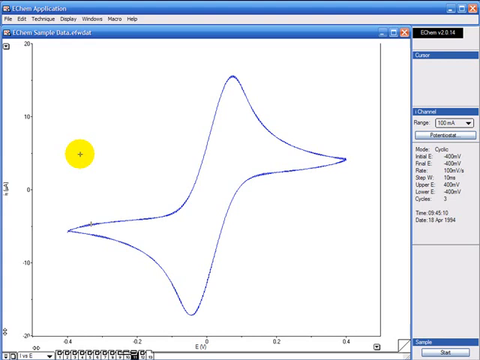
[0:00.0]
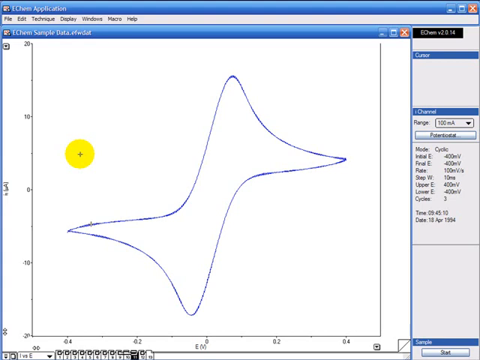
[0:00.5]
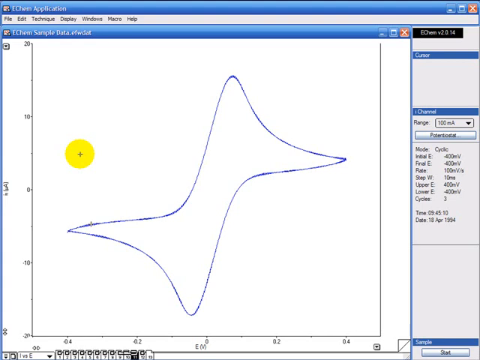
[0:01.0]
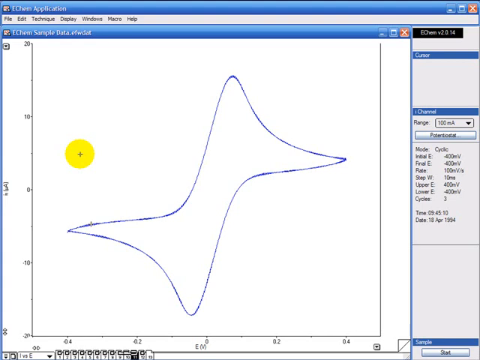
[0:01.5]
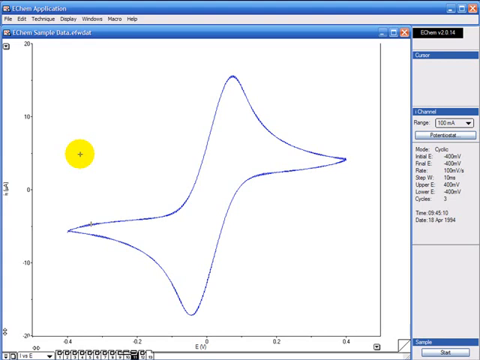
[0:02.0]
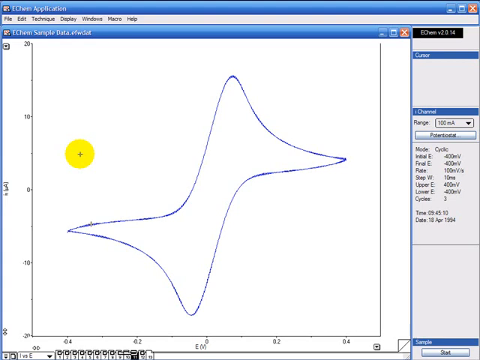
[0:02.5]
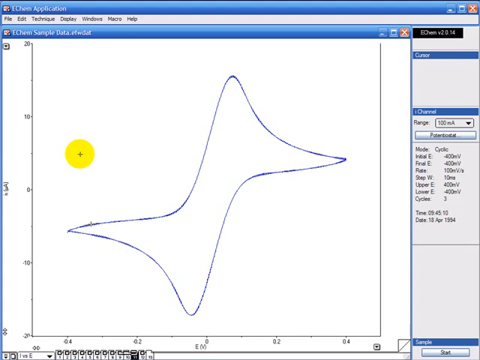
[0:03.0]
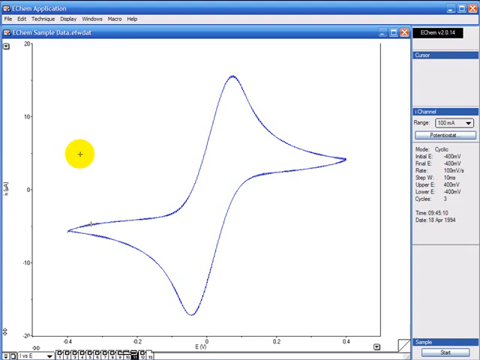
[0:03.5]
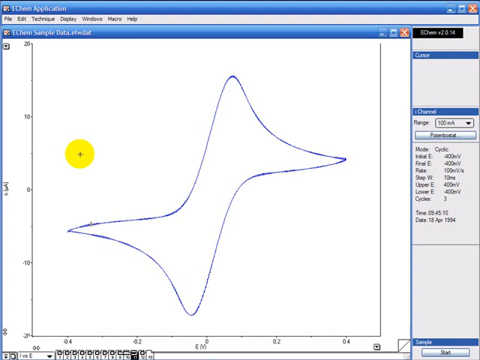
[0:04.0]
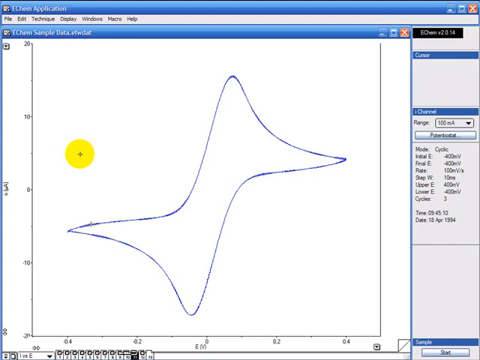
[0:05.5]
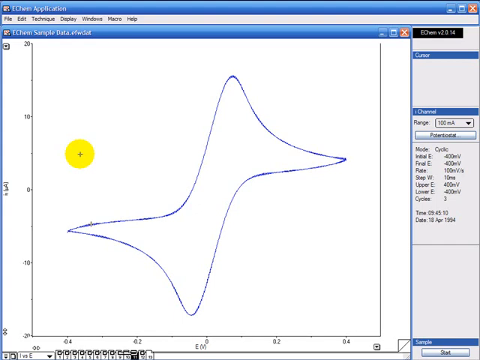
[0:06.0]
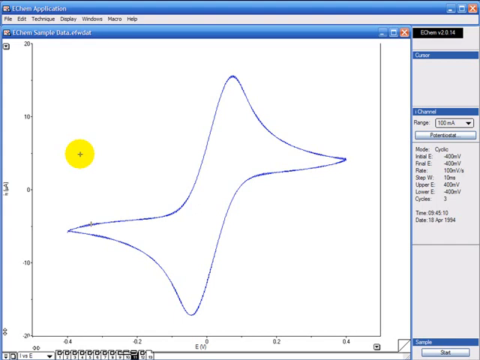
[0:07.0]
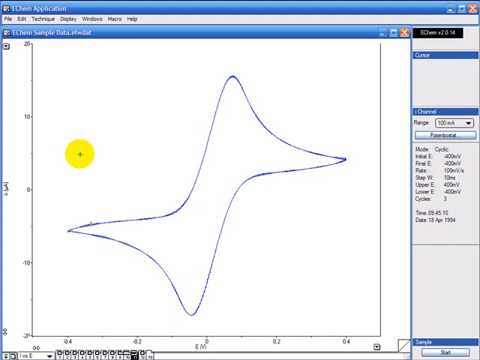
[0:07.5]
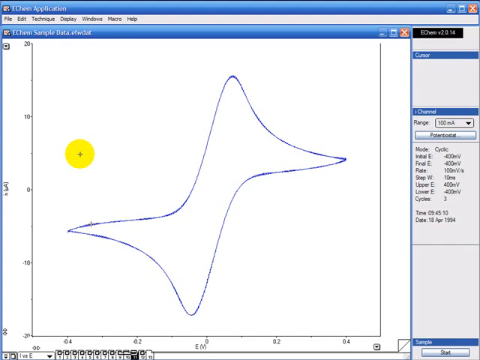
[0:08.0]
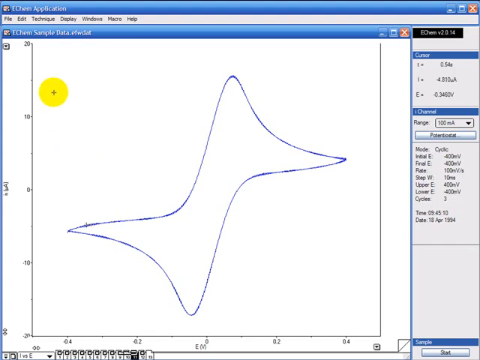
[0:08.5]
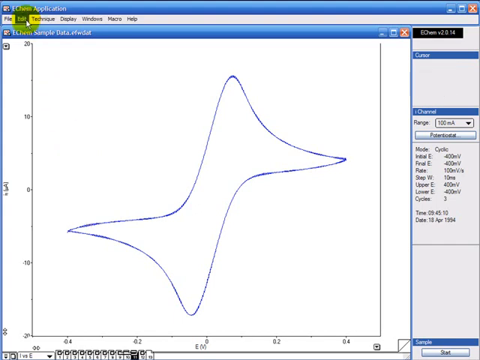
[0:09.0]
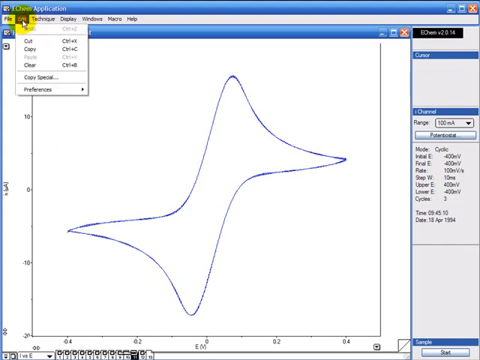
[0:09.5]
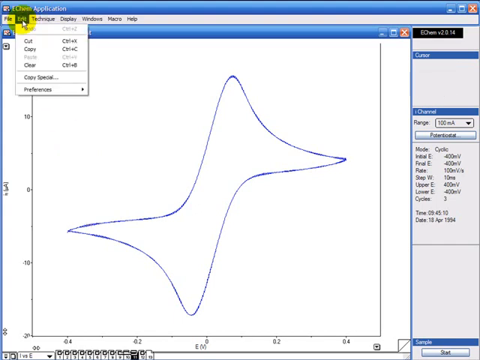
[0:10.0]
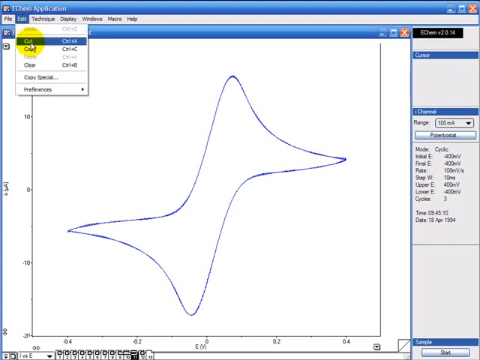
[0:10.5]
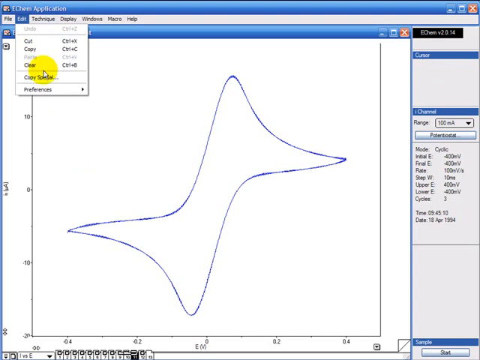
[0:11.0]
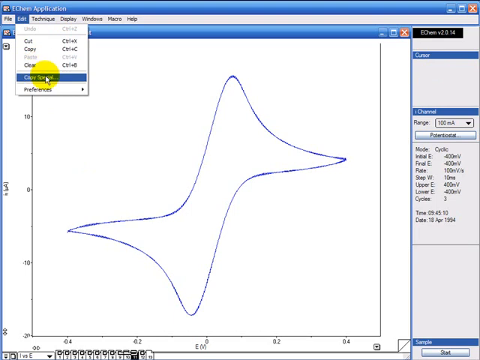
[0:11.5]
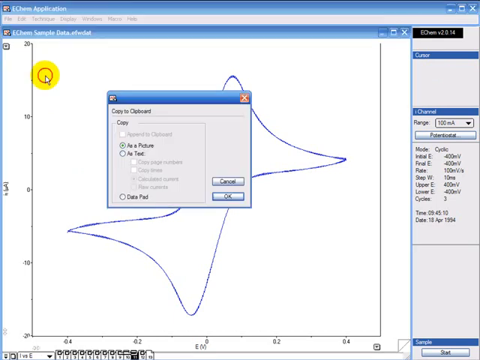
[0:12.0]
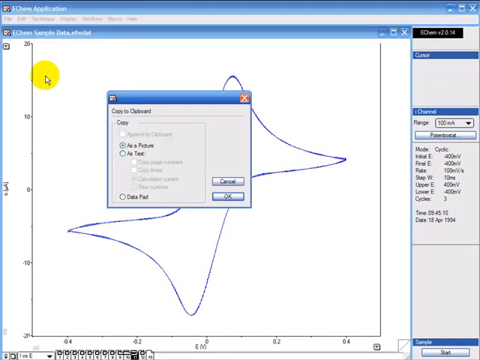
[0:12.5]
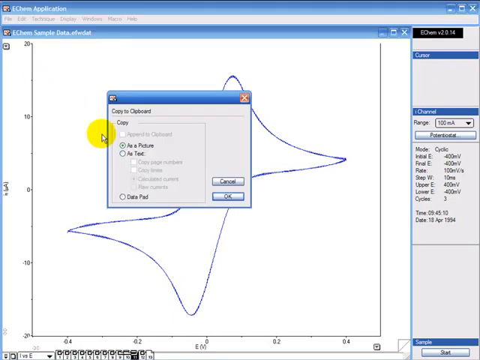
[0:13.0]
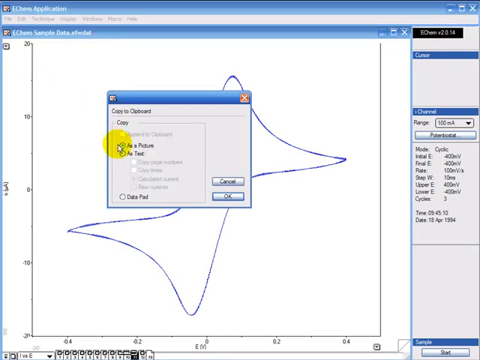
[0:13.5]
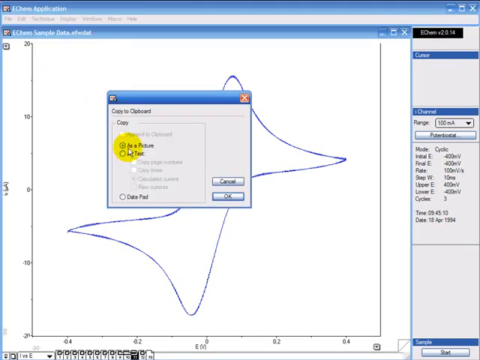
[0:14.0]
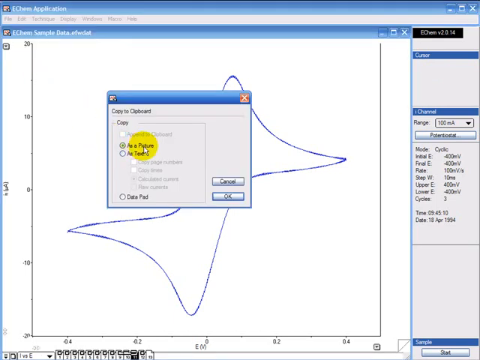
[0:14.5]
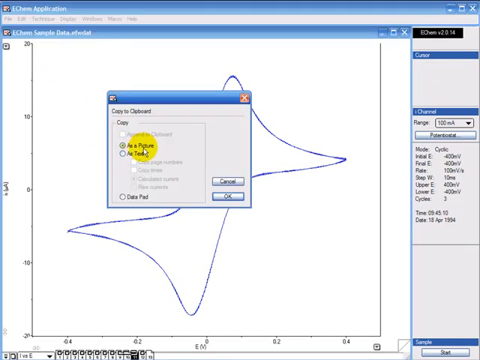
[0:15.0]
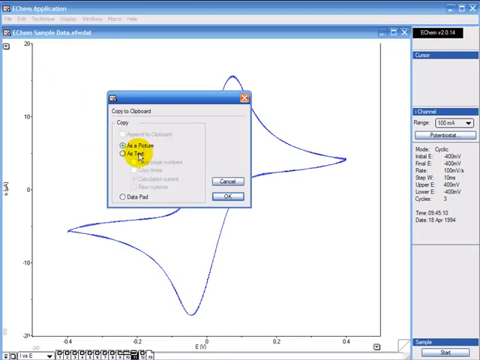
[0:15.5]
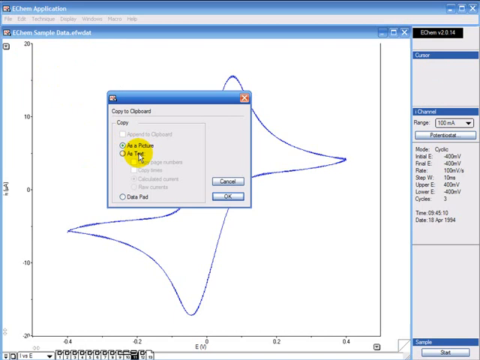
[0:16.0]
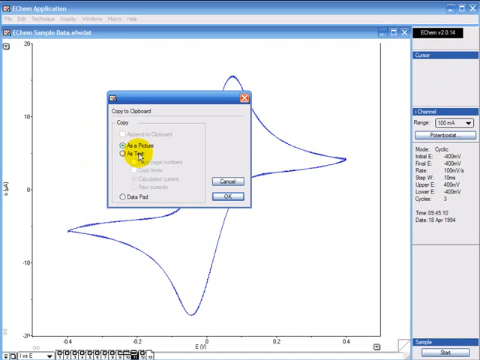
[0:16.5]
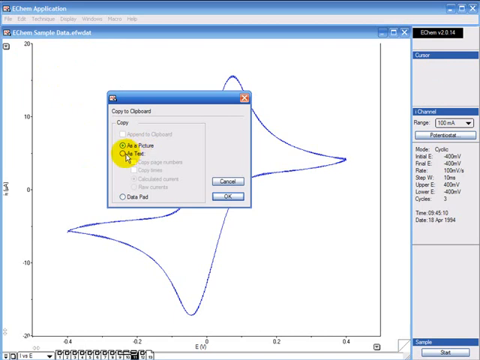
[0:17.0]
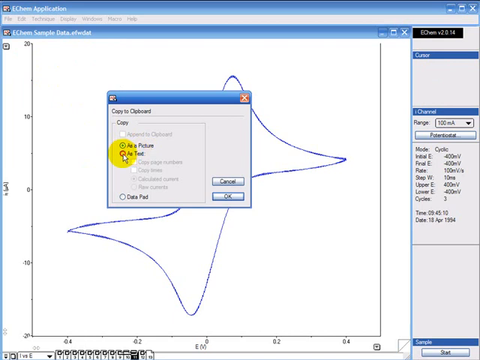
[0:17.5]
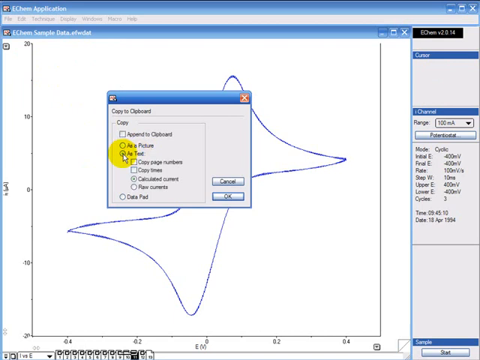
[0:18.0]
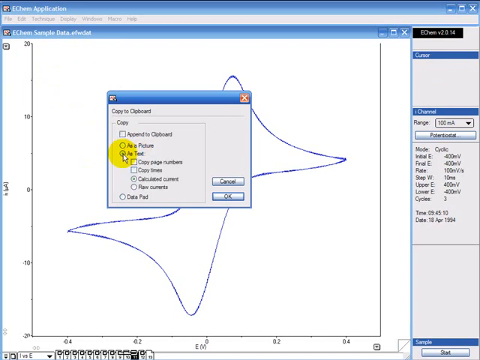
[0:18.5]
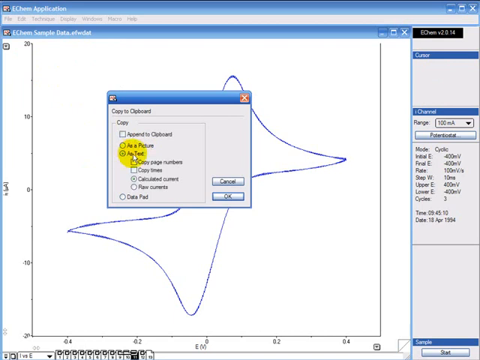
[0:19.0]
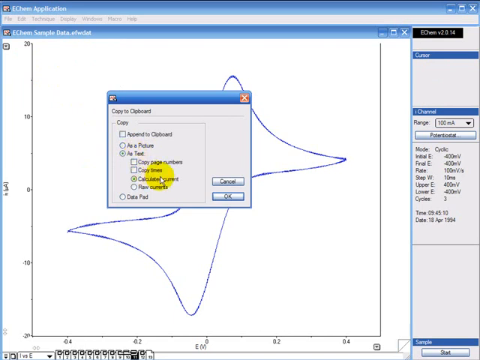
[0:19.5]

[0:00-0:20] A computer application appears to show a plotted graph with an awkward, sort of oblong, skewed shape. A yellow-highlighted cursor goes up to Edit, then copy to clipboard, and chooses not as picture but as text; the steps appear to walk through adding the shape to another application. On the right-hand side of the image there is a lot of information in a kind of toolbar; it says "cursor" and has a range, mode, "upper E", "lower E" and "cycles". The top menu bar reads "file", "edit", "technique", "display", "windows", "macro" and "help".